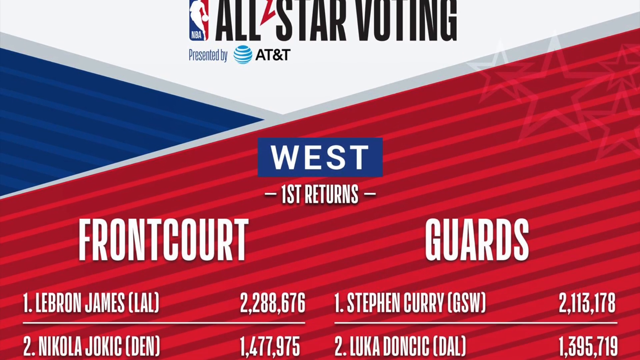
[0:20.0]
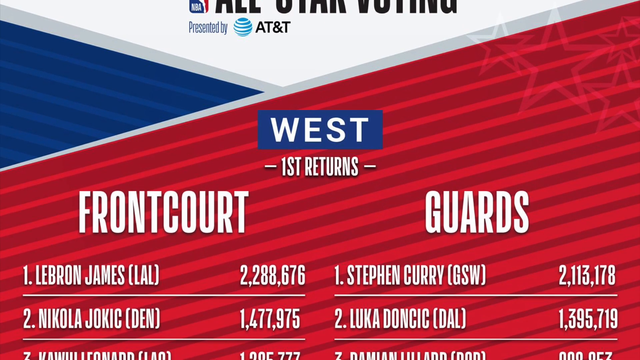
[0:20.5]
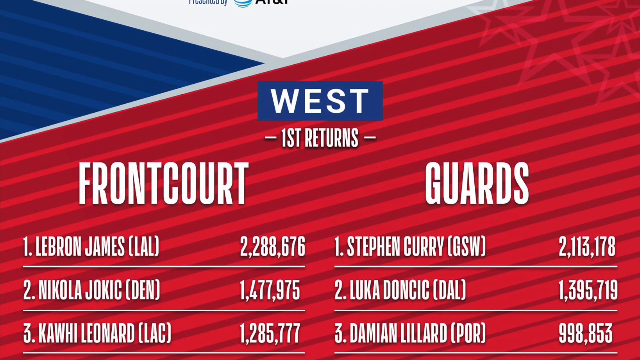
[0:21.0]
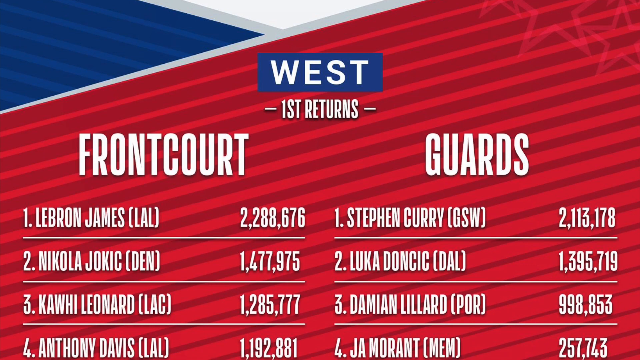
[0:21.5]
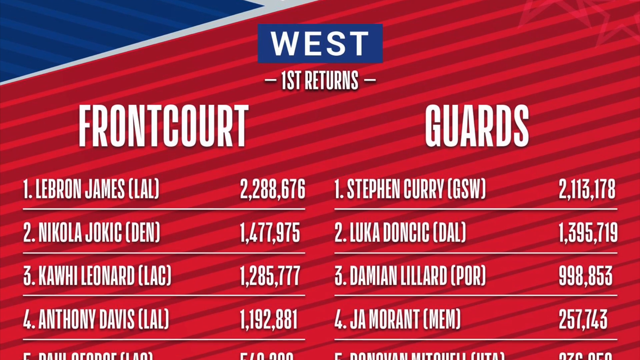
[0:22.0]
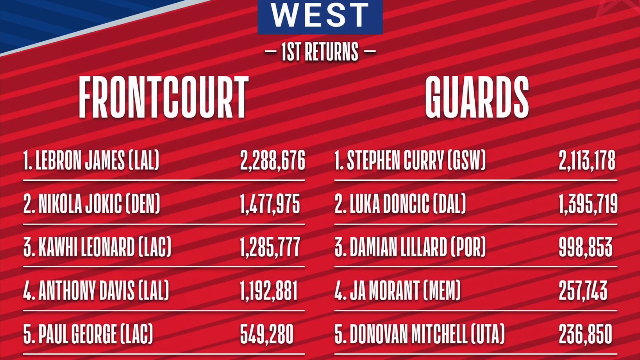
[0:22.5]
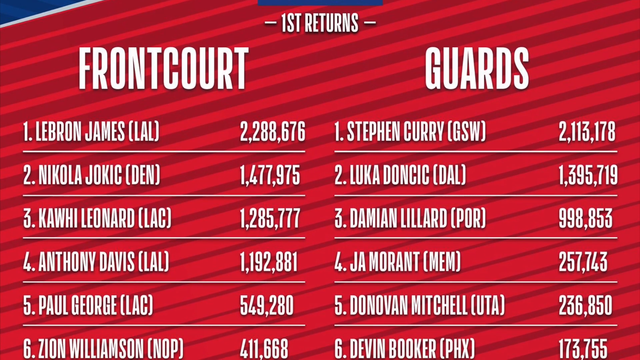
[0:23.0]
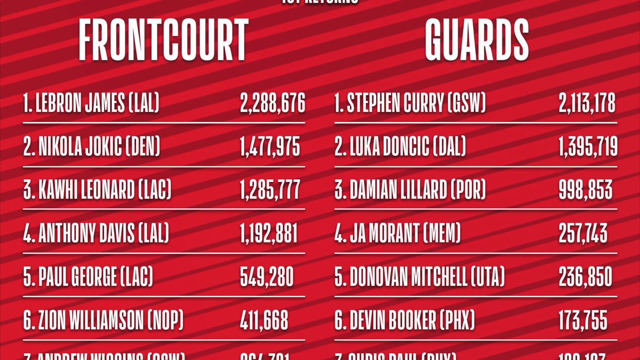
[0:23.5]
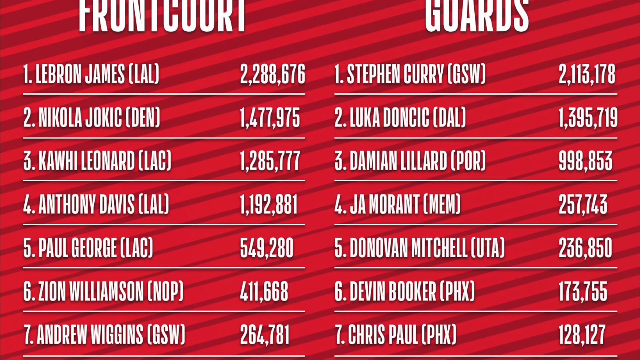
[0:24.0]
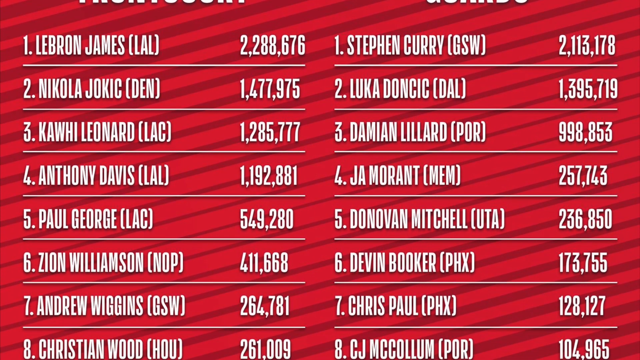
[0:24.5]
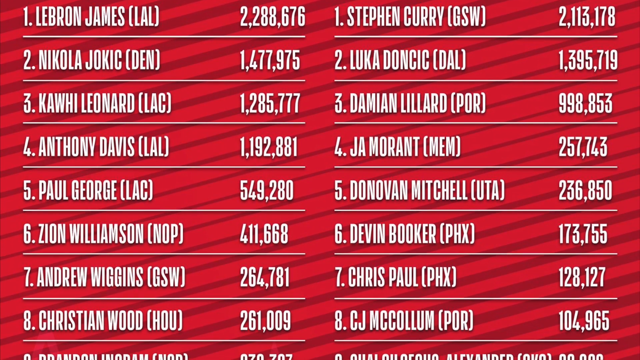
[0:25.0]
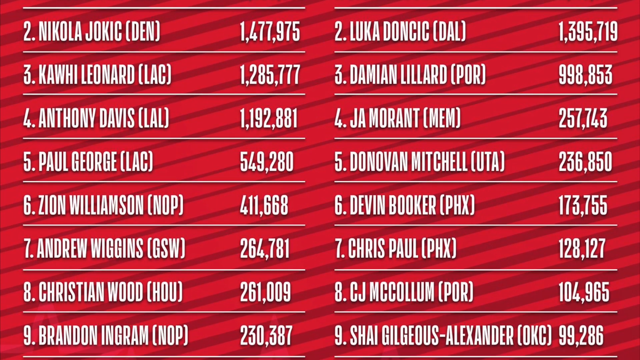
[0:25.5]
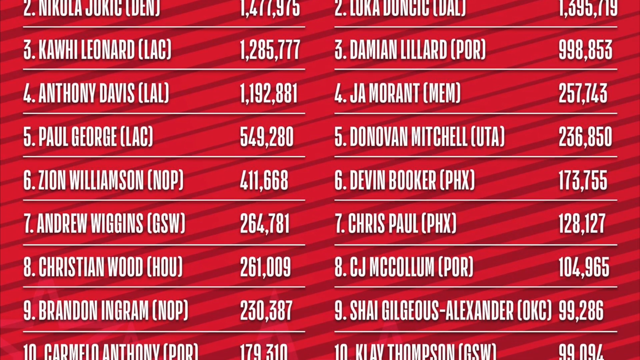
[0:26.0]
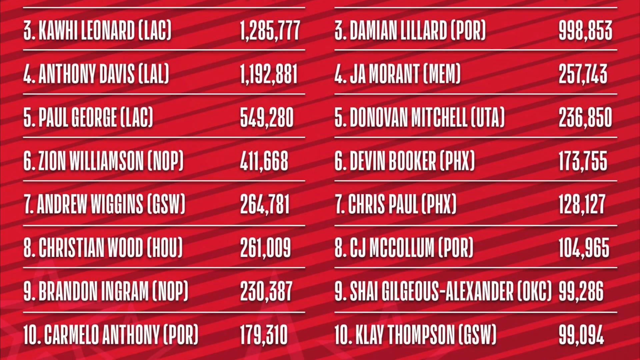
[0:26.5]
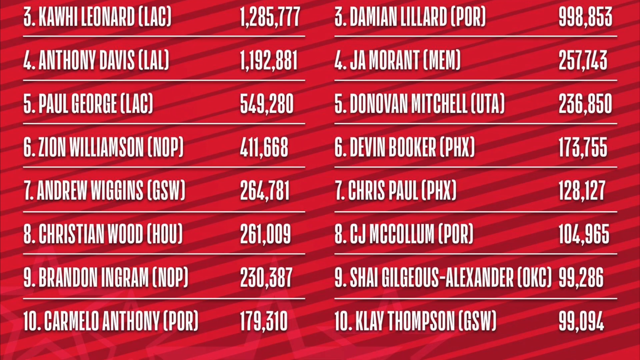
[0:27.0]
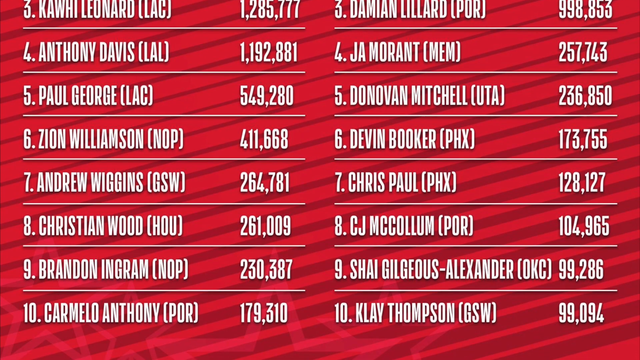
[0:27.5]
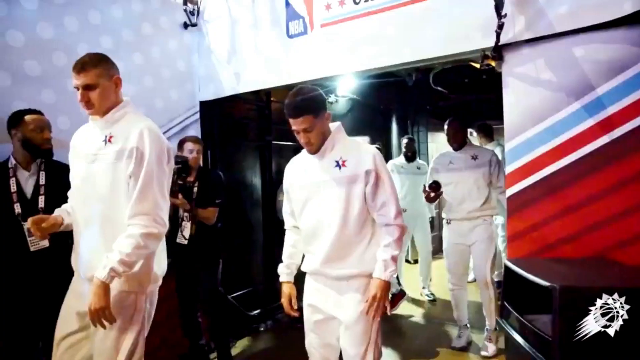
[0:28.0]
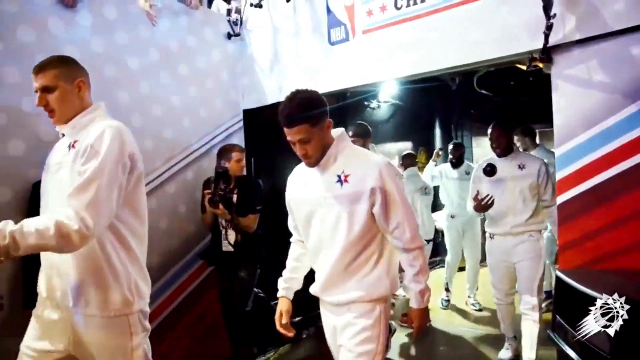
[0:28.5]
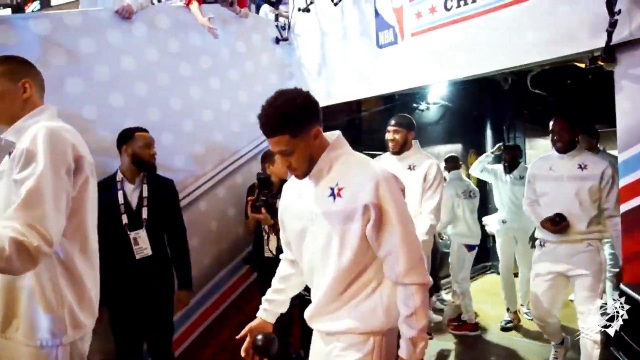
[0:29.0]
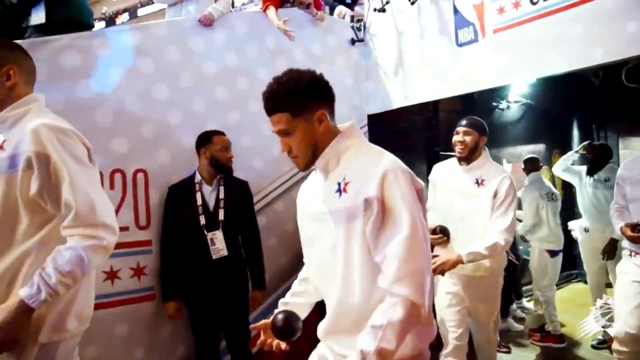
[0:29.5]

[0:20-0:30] The NBA All-Star voting for the West is shown, with the frontcourt on the left and the guards on the right. The frontcourt lists LeBron James, Nicolai Jokic, Kawhi Leonard, Anthony Davis, Paul George, Zion Williamson, Andrew Wiggins, Christian Wood, Brandon Ingram and Carmelo Anthony. The guards list Steph Curry, Luka Doncic, Damian Lillard, Ja Morant, Donovan Mitchell, Devin Booker, Chris Paul, CJ McCollum, Shai Gilgeous Alexander and Klay Thompson. The video then transitions to players entering the arena: seven or eight players in white tracksuits, with staff wearing suits behind them. Above them, a couple of fans' arms reach out toward the players, who are out of reach.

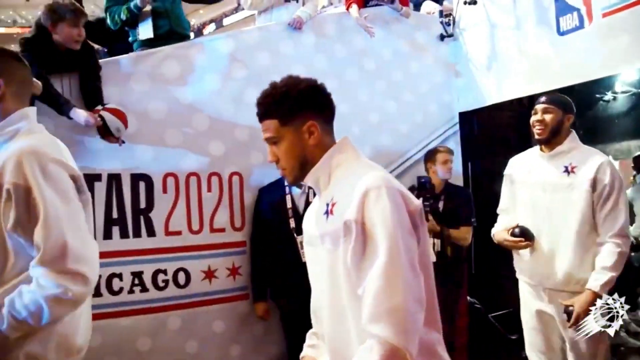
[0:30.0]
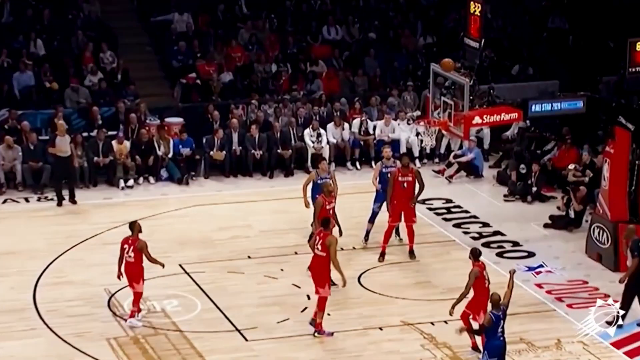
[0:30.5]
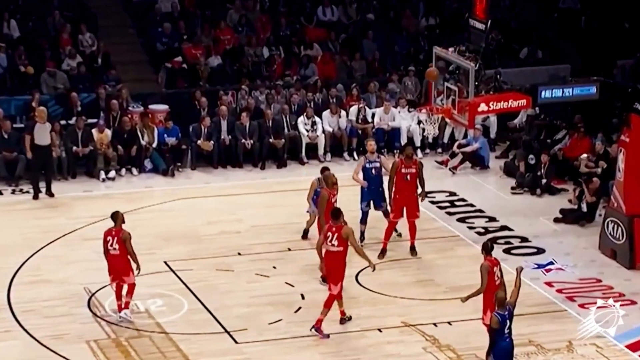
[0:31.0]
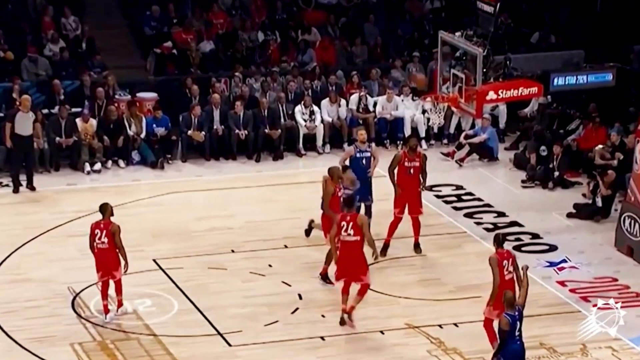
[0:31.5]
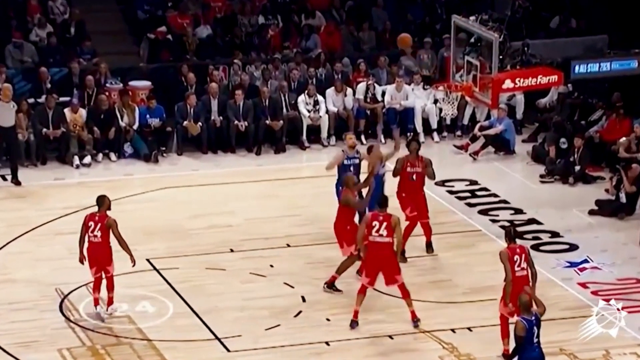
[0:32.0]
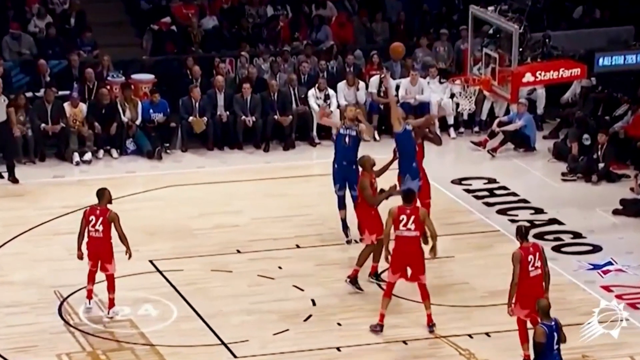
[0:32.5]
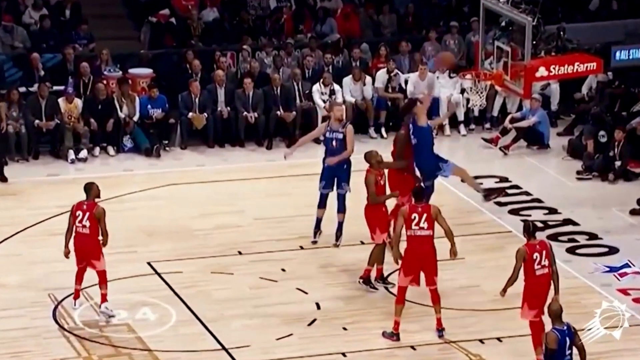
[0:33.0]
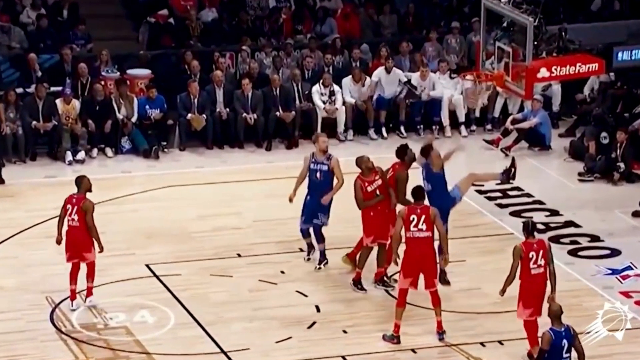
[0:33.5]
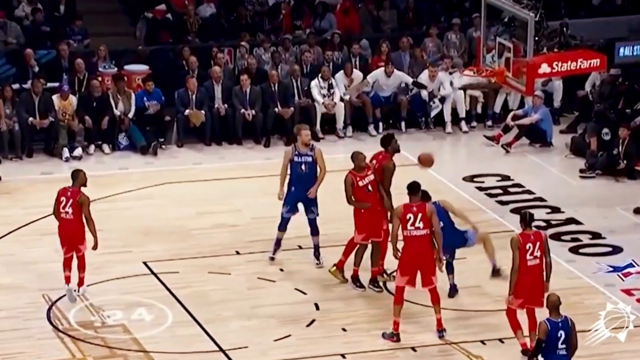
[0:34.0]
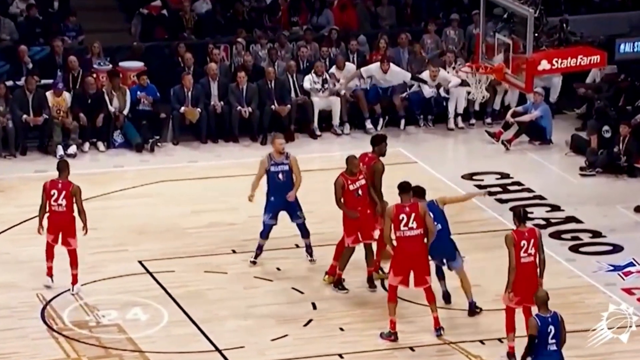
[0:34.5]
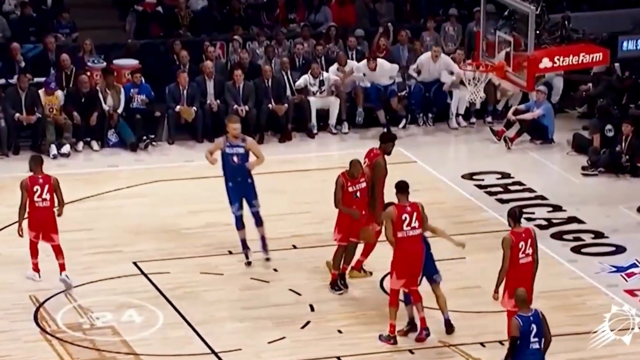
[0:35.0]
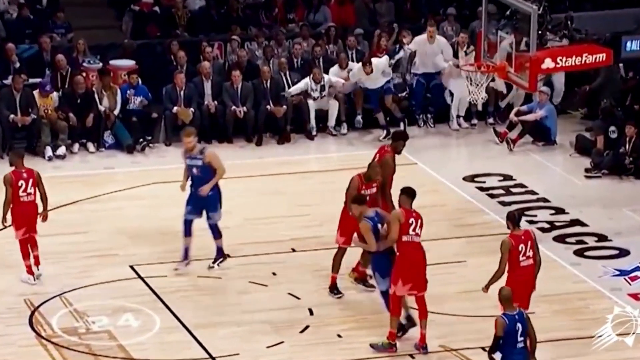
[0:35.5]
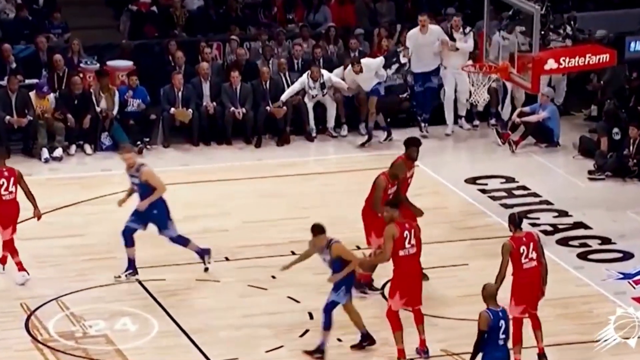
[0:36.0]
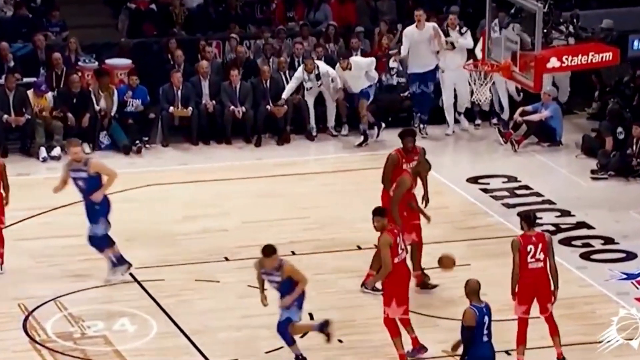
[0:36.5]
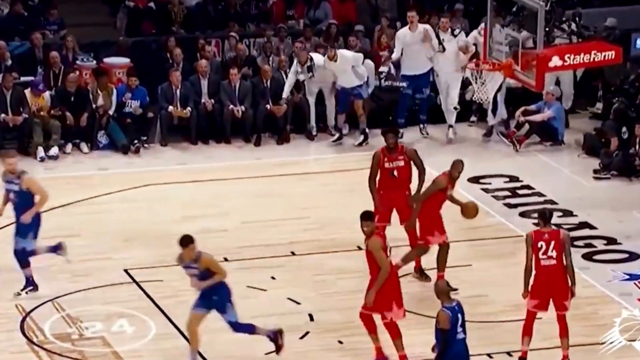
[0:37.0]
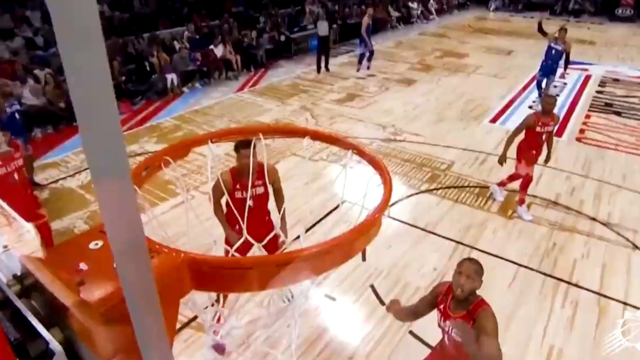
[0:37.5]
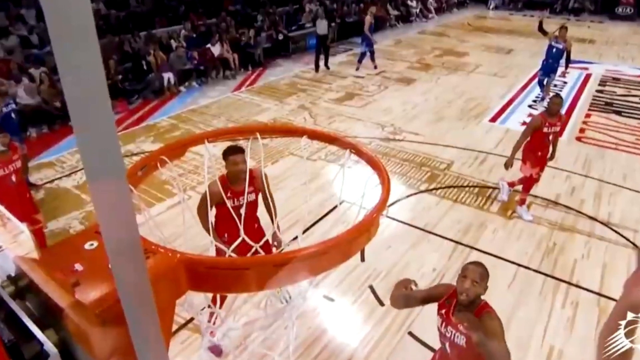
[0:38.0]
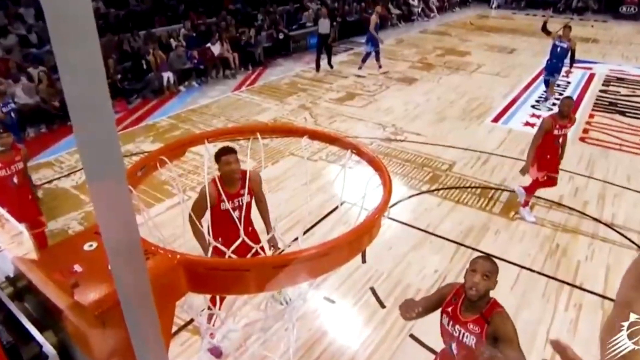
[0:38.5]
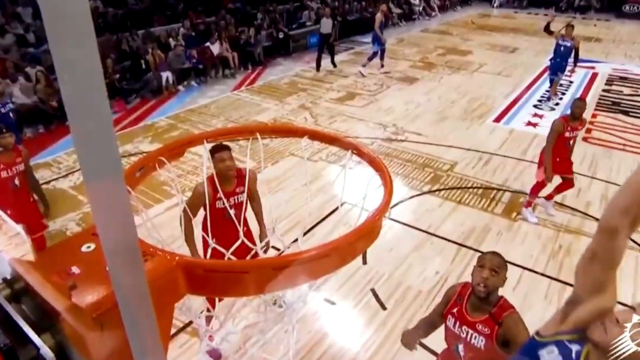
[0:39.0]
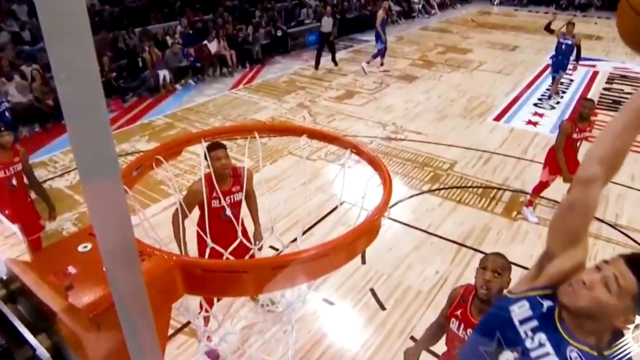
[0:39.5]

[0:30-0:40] The players in white tracksuits enter the arena briefly. The video then transitions to a game highlight with eight players on the court, four in white and four in blue. The blue team gets a rebound, the ball bounces above the rim, and a player in blue comes from behind and dunks it, surprising the red team's players. The shot then switches to a camera placed on the rim, showing the dunking player beginning the dunk.